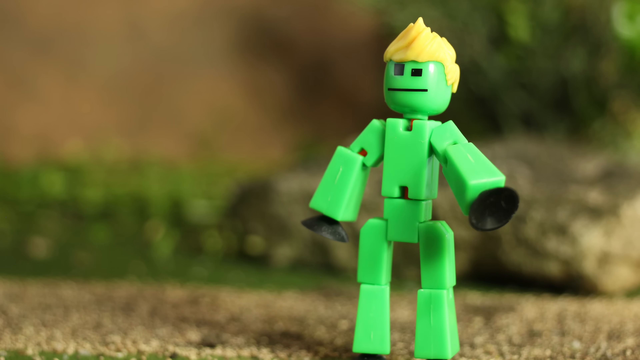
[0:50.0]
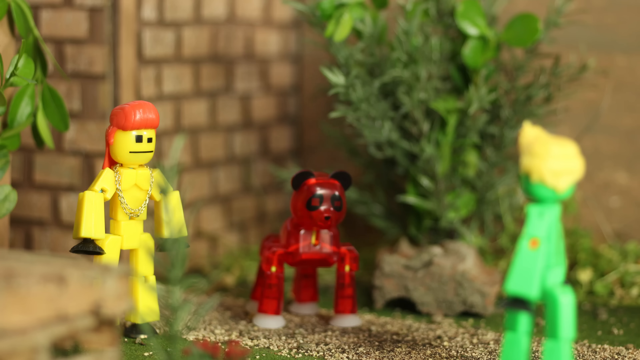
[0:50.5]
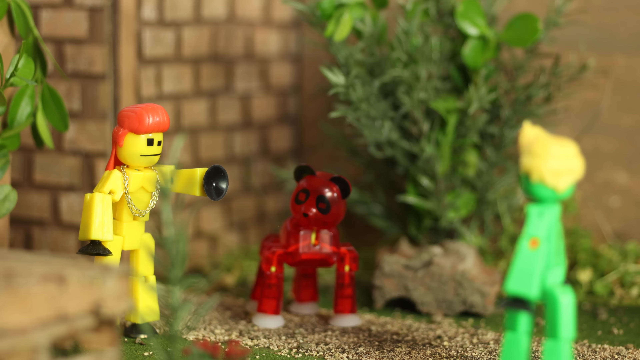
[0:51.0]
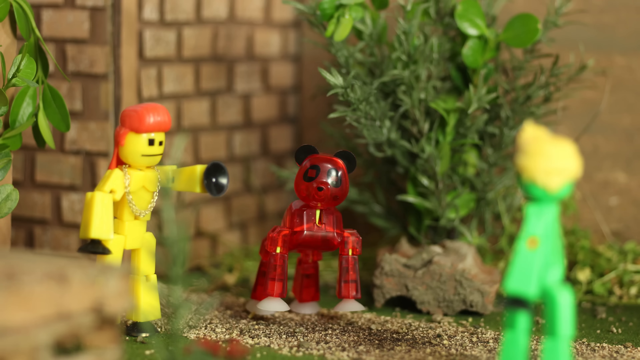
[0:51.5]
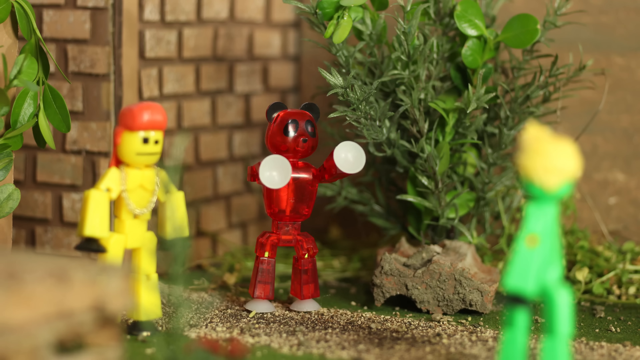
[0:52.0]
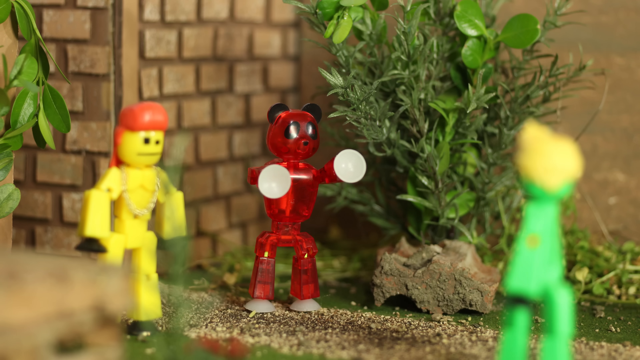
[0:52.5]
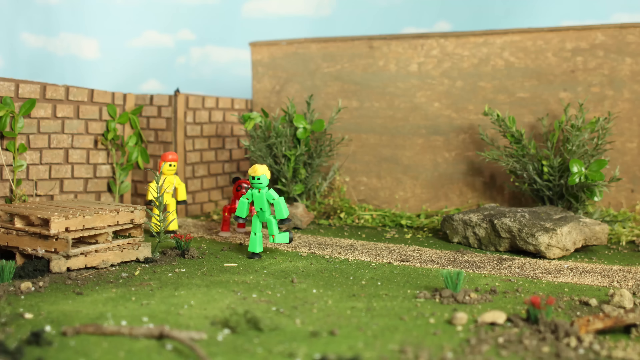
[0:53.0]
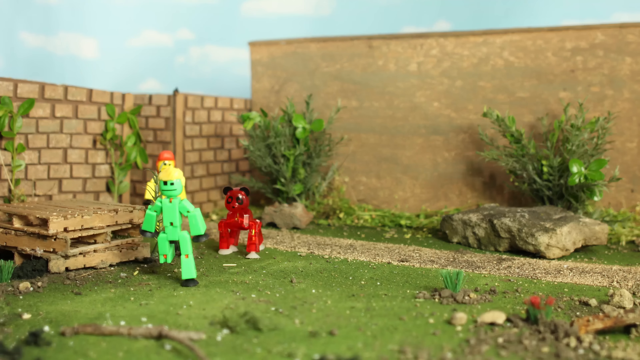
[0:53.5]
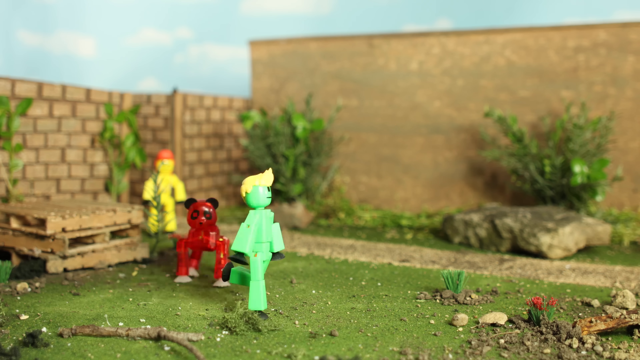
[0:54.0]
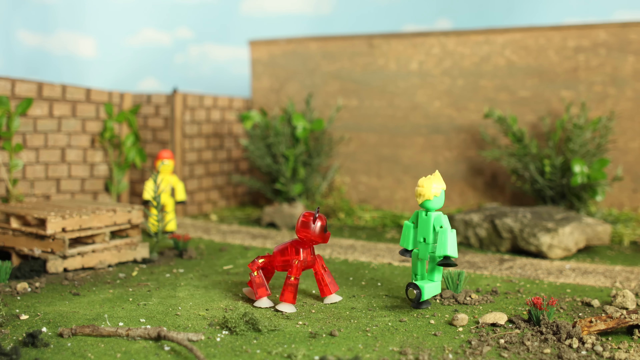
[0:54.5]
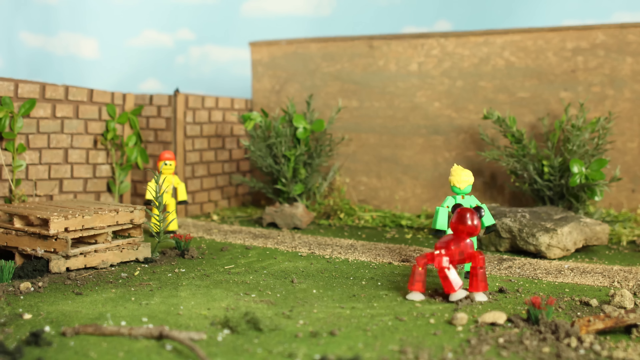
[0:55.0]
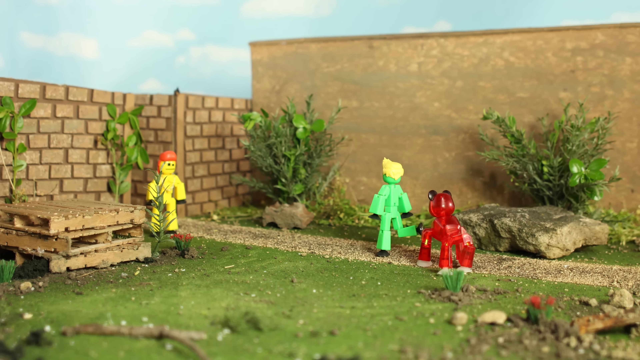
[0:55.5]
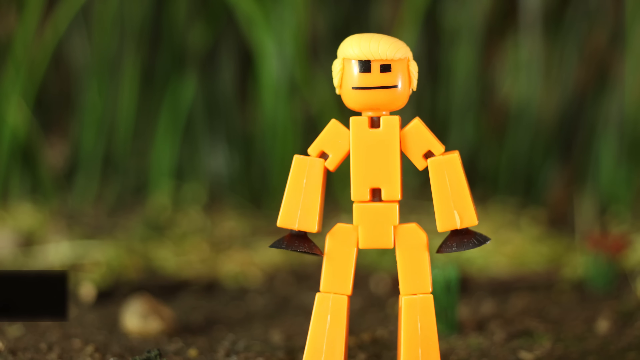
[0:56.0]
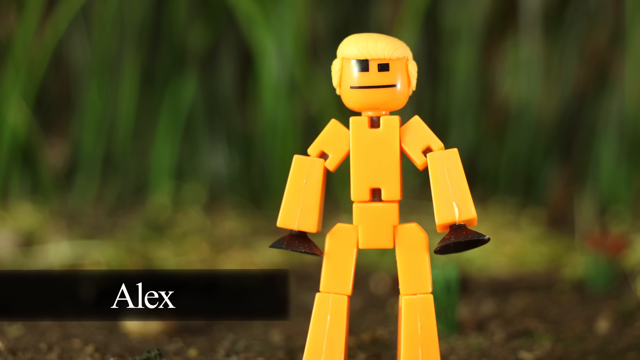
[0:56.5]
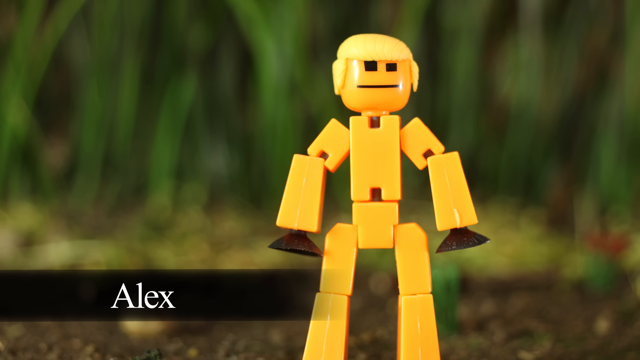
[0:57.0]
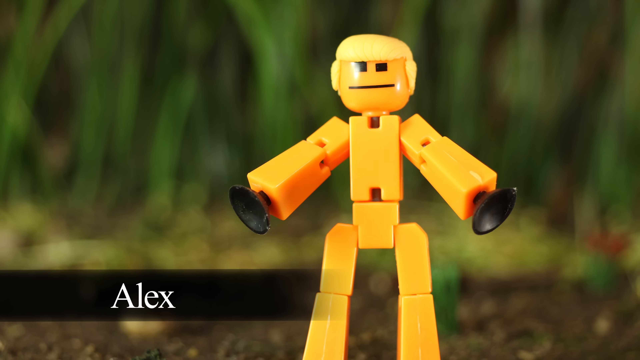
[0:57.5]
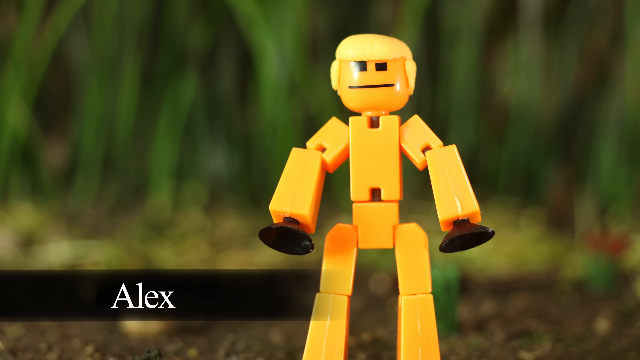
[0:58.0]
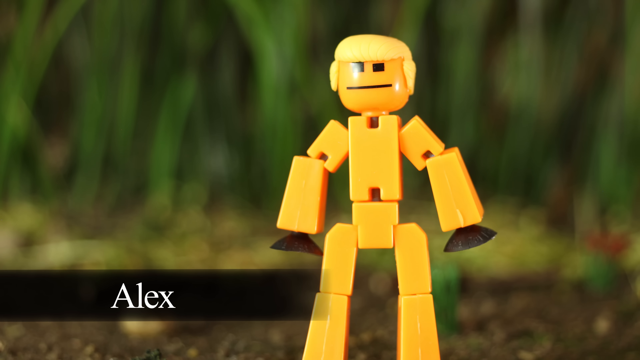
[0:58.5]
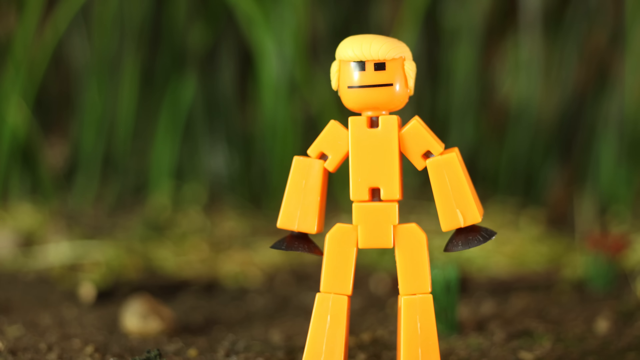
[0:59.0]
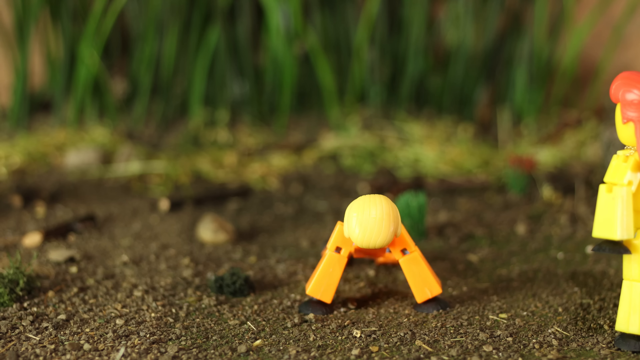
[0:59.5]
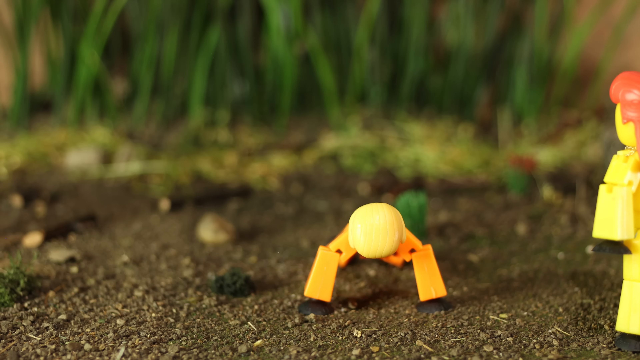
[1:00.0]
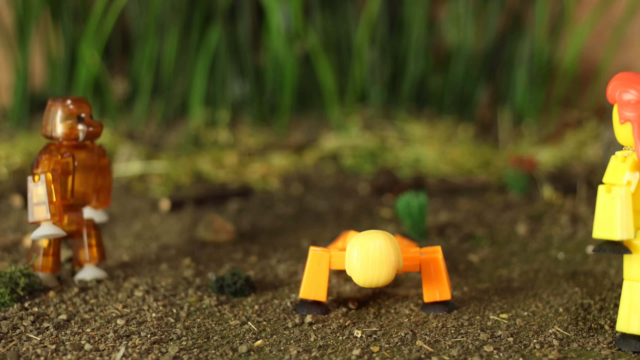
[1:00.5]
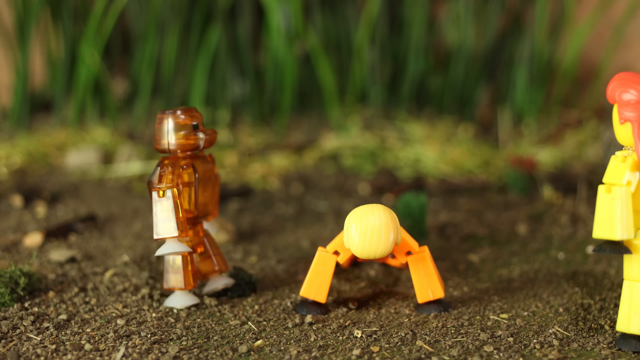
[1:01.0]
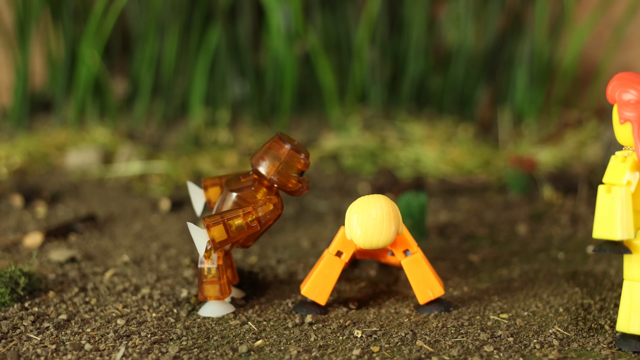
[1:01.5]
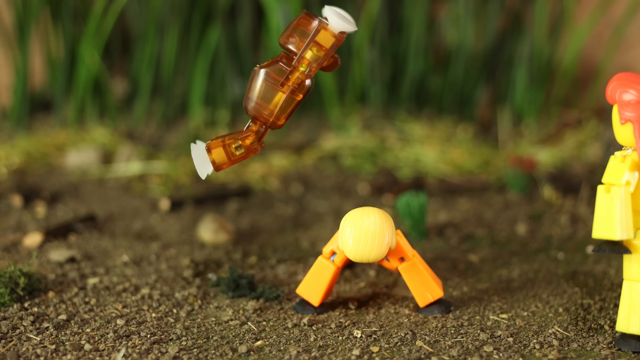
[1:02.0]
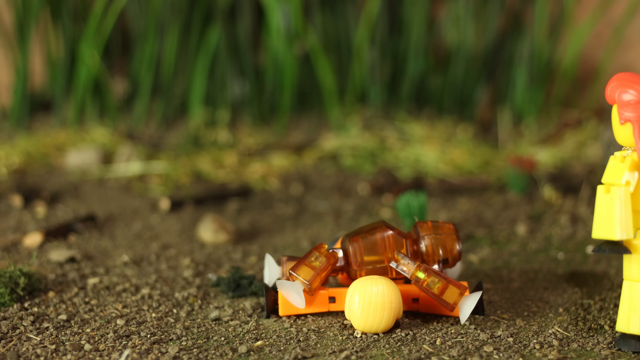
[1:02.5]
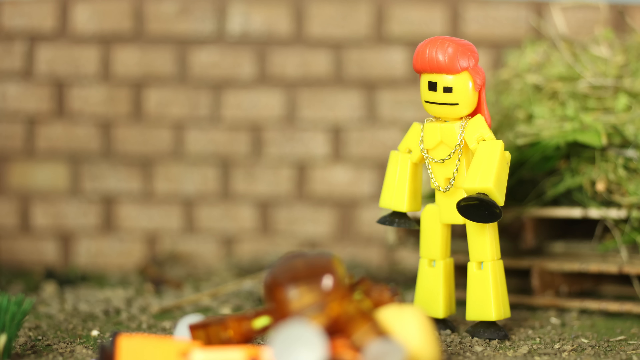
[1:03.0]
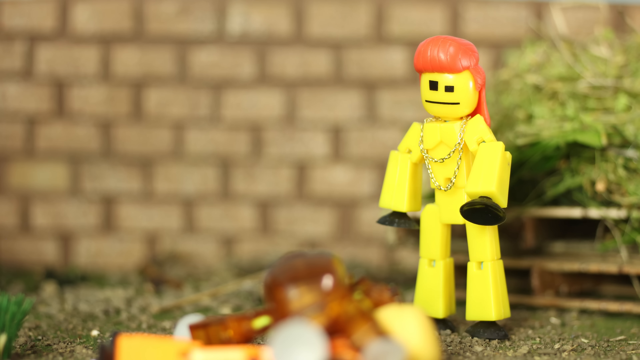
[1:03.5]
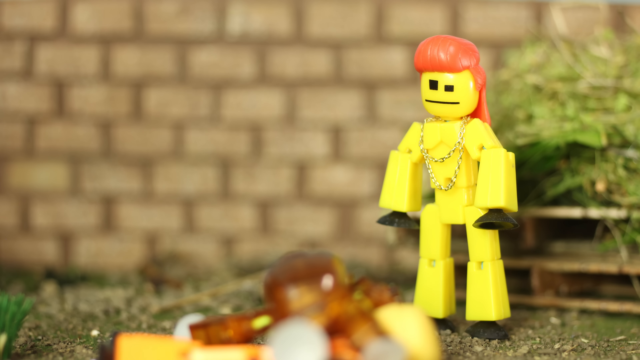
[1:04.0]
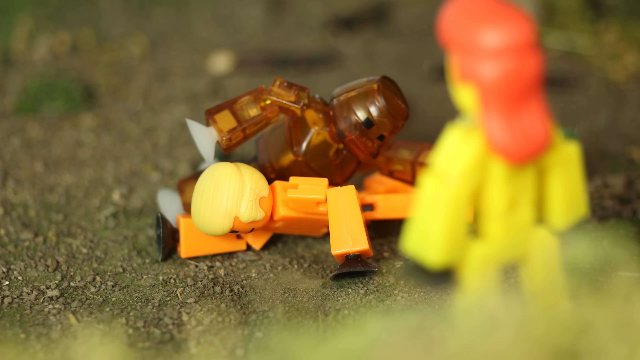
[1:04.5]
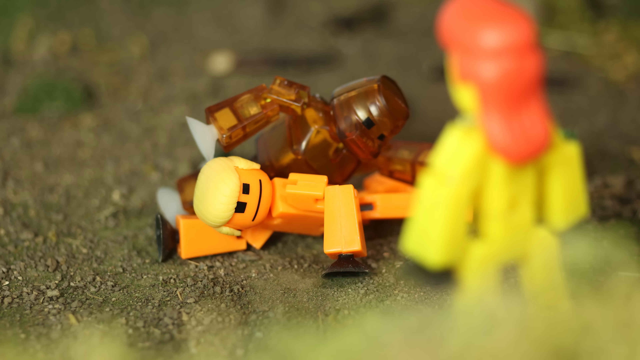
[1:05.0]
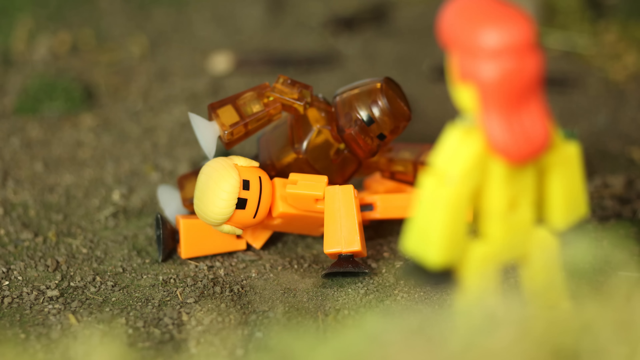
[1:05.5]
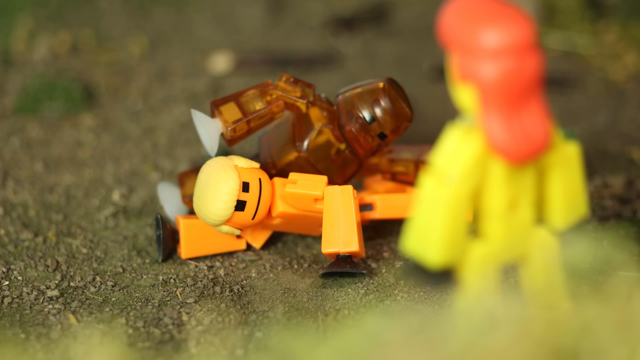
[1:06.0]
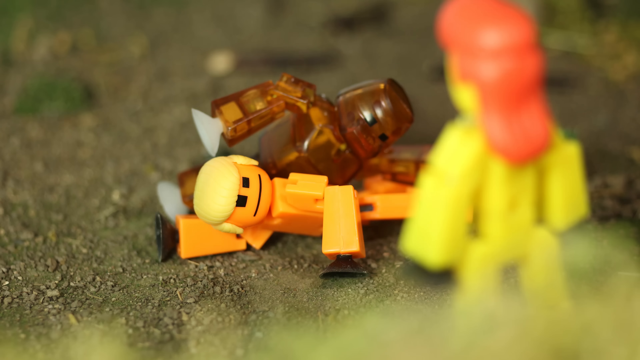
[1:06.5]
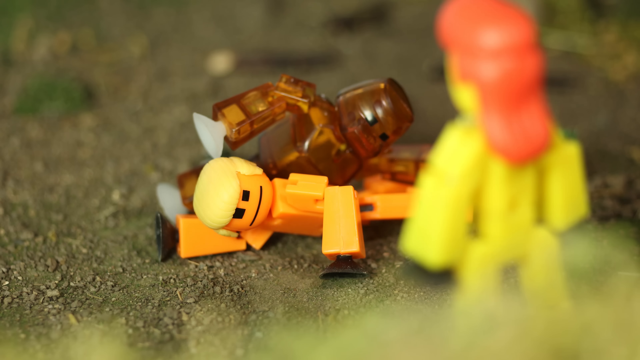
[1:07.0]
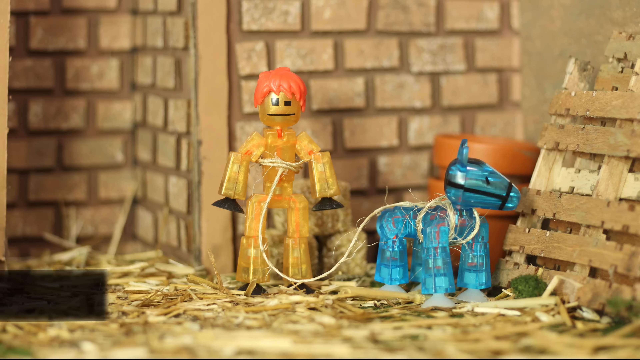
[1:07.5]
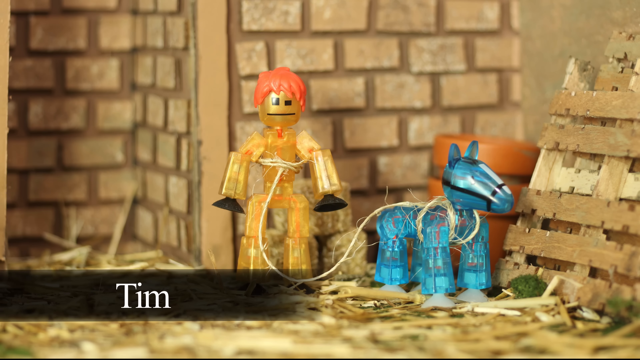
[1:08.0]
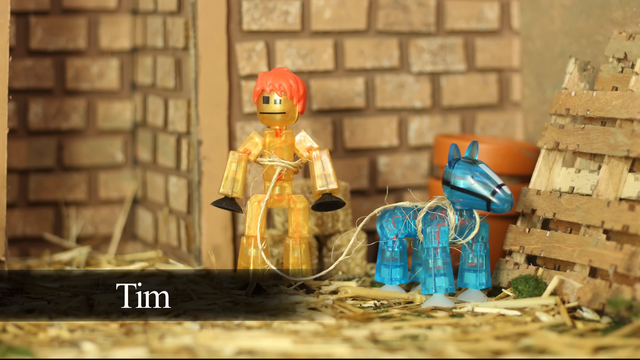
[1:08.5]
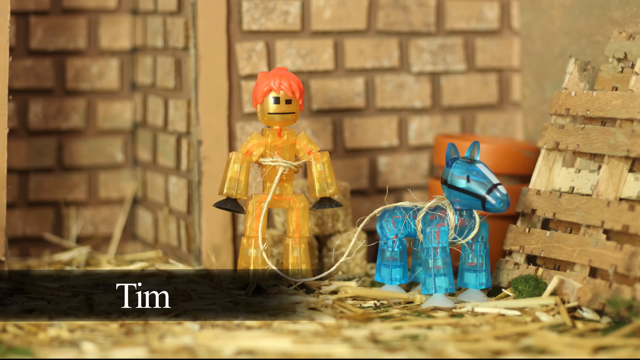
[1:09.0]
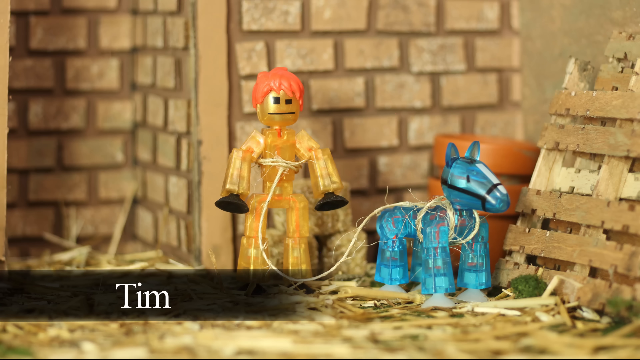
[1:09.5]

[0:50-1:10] Little Lego-ish people appear, apparently including a yellow guy named Alex and a green guy along with a dog. One of the yellow guys is doing push-ups when what could be his friend, who is gold, comes and jumps on him. A guy named Tim has kind of a harness around him that is also wrapped to his animal, a dog. The dog kind of stands up, puts its paws up, and chases the little green guy. The yellow guy keeps doing push-ups. A lady with longer hair yells at the guy who jumped on her buddy; she is wearing a necklace. It almost seems like a family, with maybe the mom yelling at the kids for arguing.